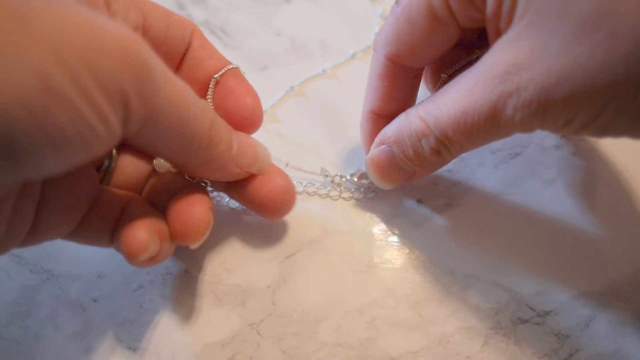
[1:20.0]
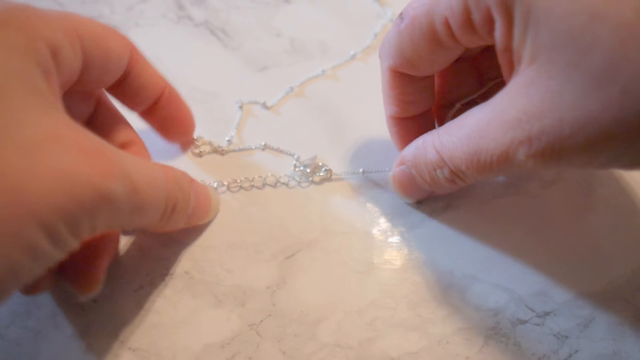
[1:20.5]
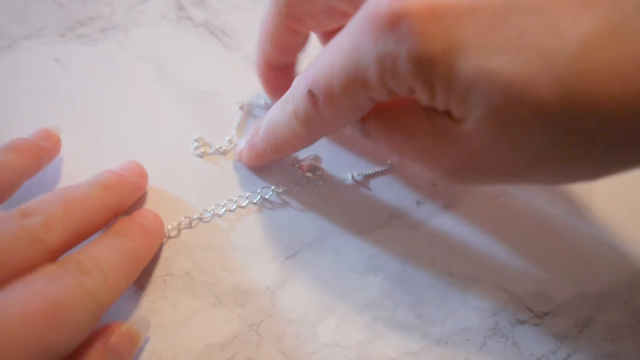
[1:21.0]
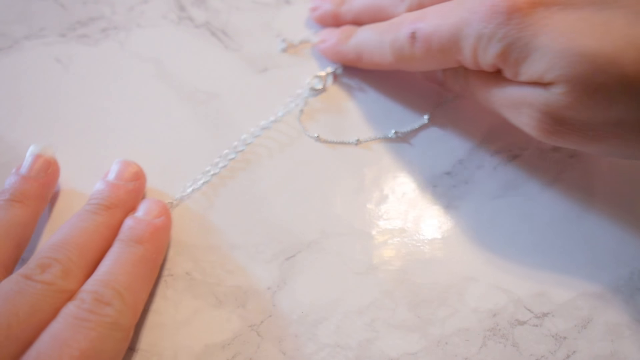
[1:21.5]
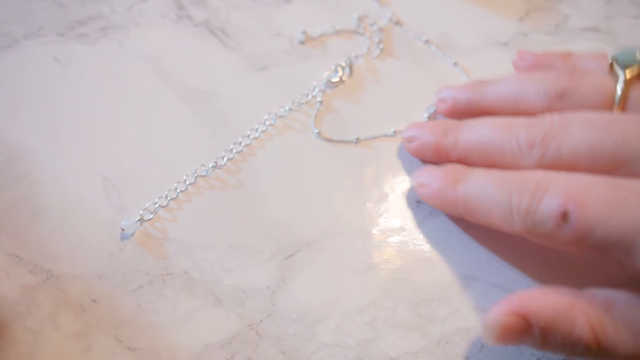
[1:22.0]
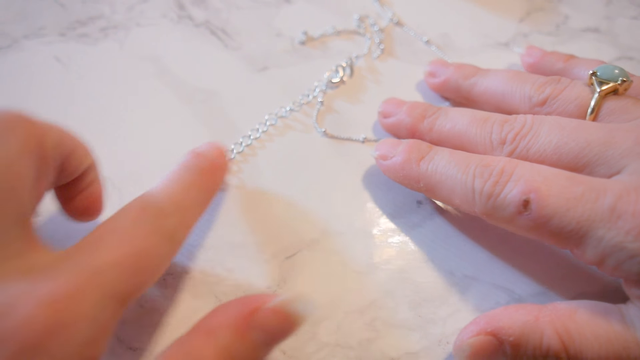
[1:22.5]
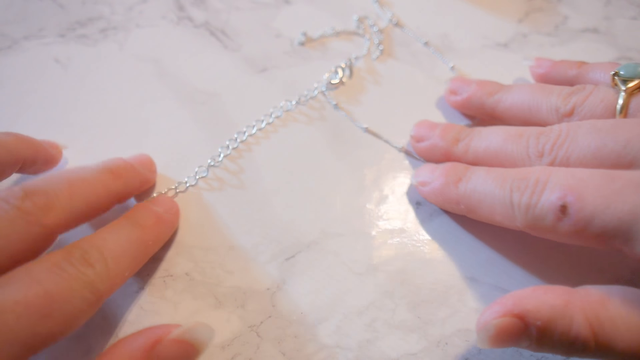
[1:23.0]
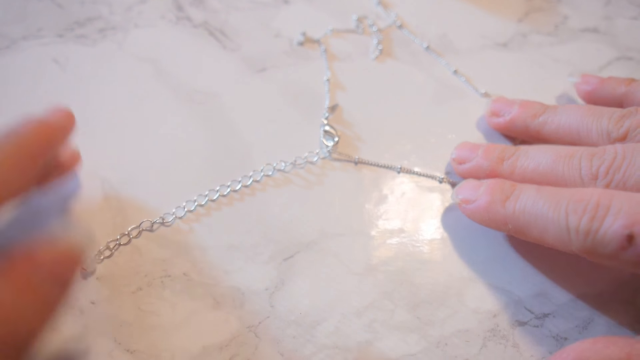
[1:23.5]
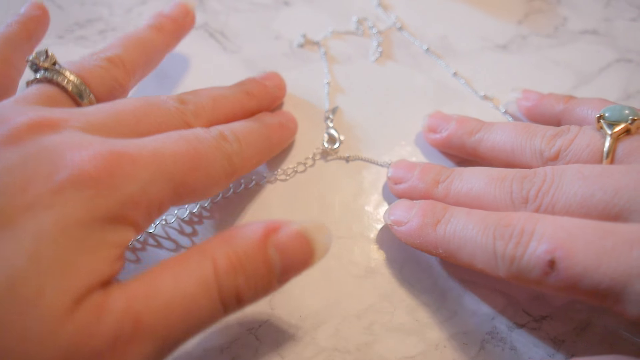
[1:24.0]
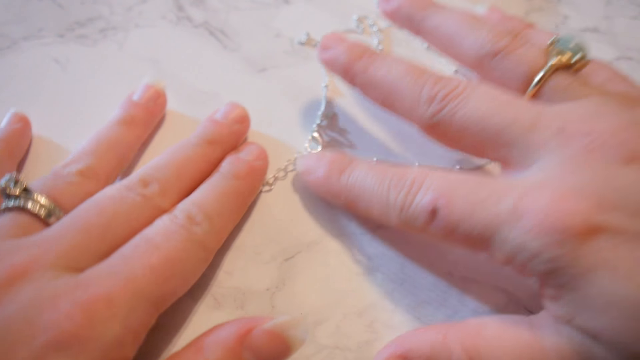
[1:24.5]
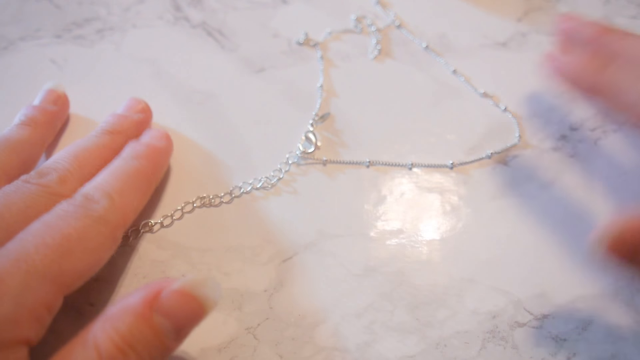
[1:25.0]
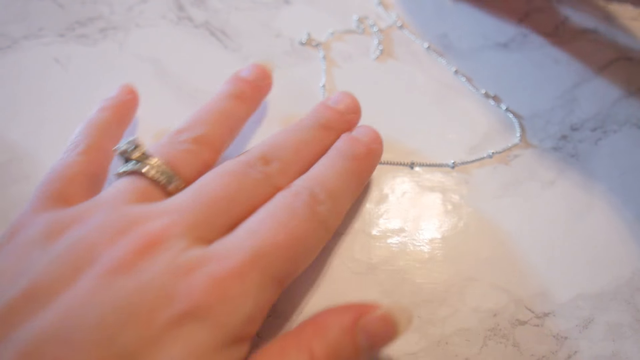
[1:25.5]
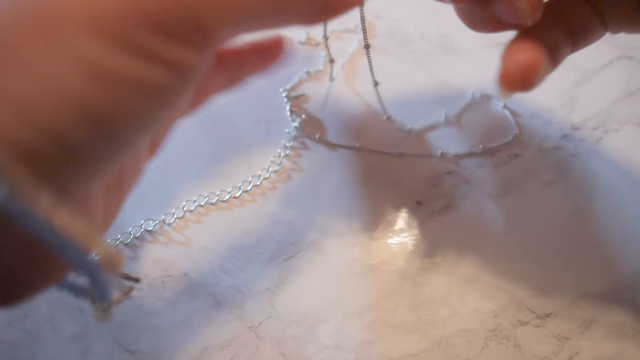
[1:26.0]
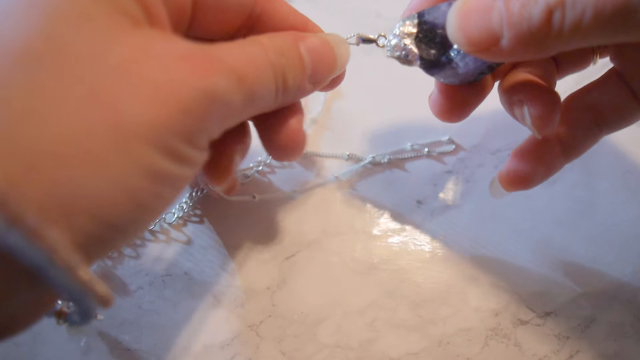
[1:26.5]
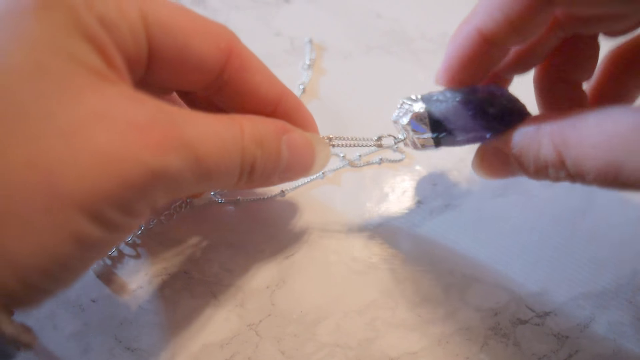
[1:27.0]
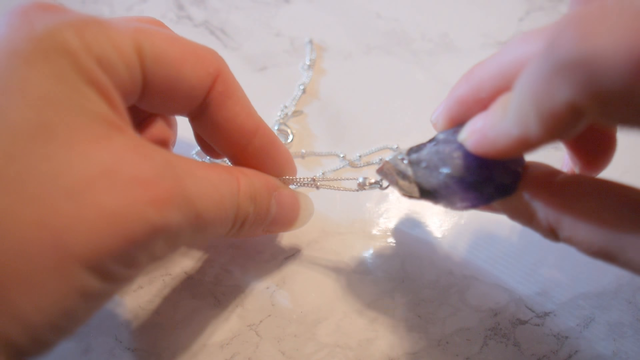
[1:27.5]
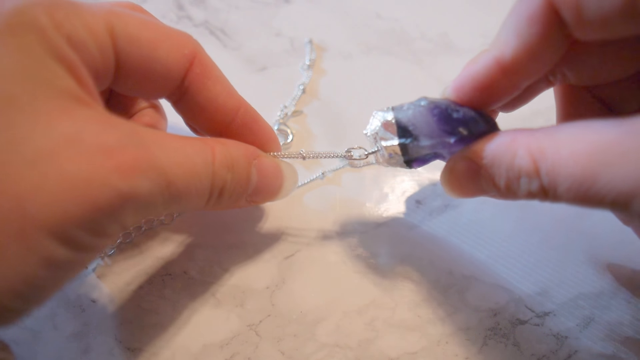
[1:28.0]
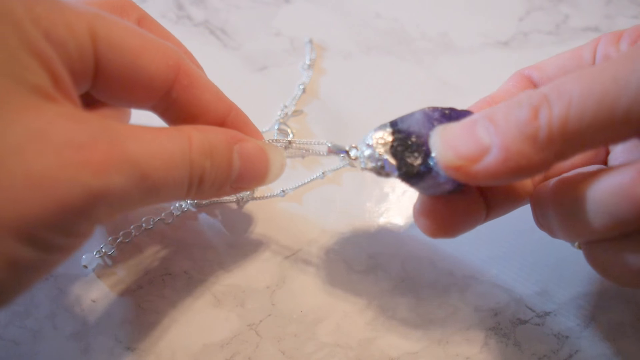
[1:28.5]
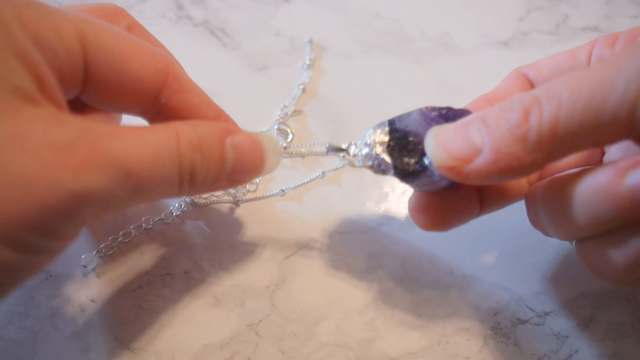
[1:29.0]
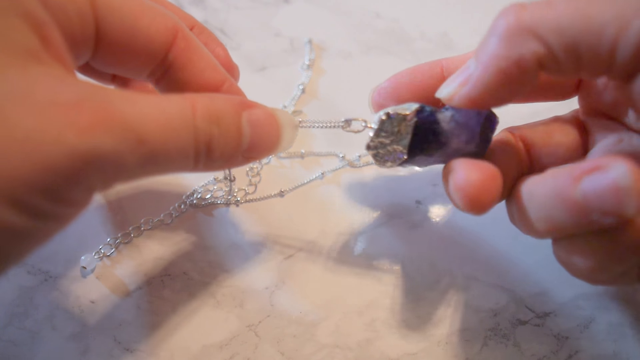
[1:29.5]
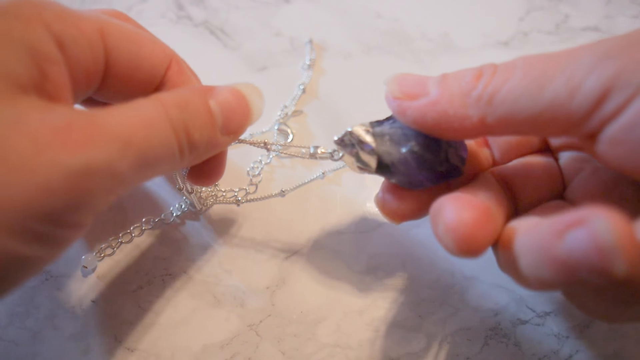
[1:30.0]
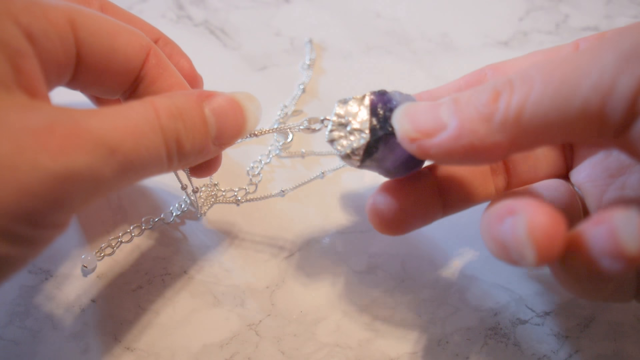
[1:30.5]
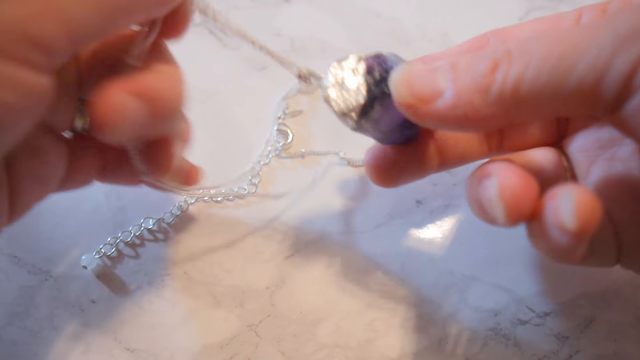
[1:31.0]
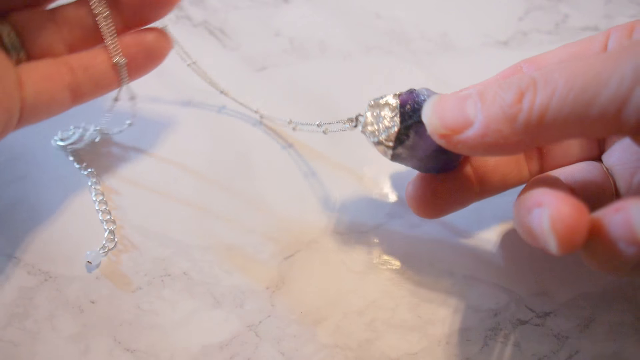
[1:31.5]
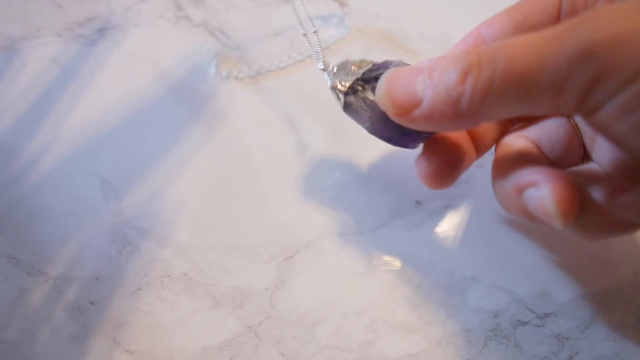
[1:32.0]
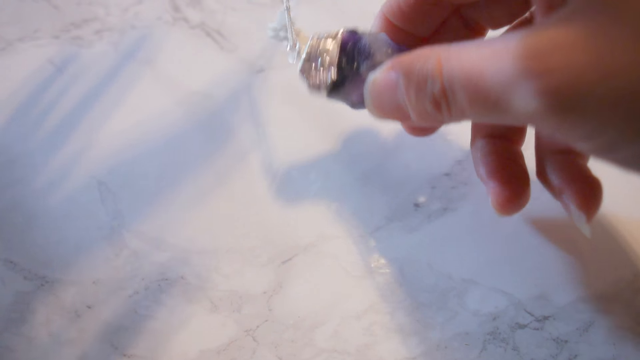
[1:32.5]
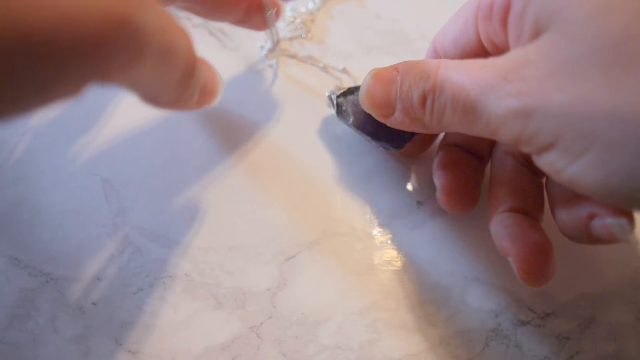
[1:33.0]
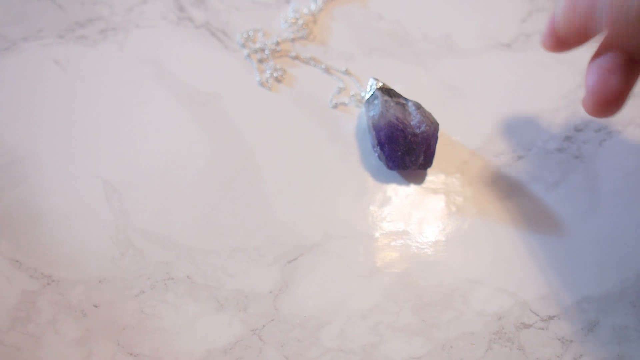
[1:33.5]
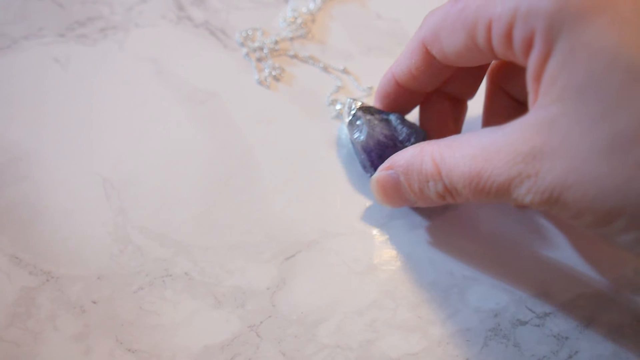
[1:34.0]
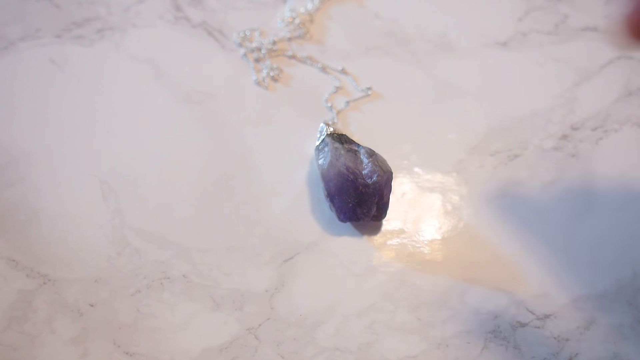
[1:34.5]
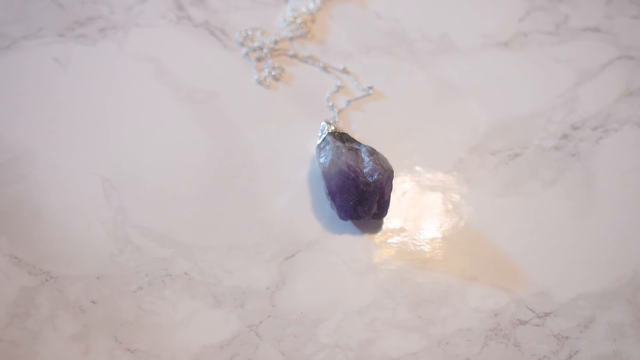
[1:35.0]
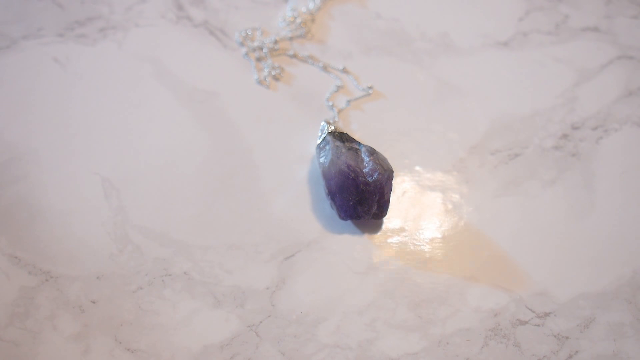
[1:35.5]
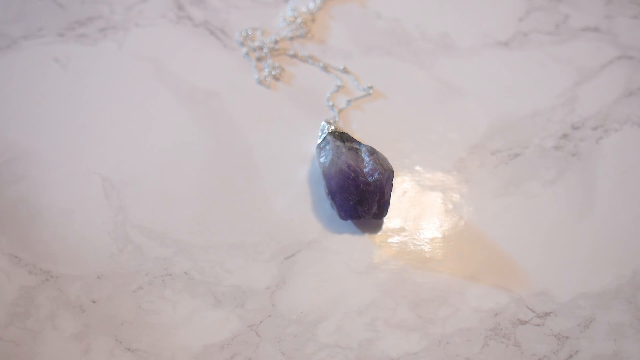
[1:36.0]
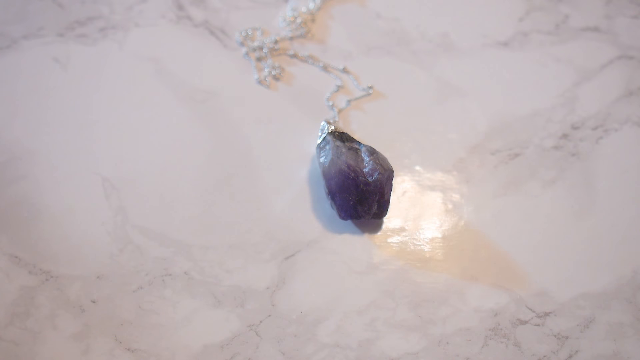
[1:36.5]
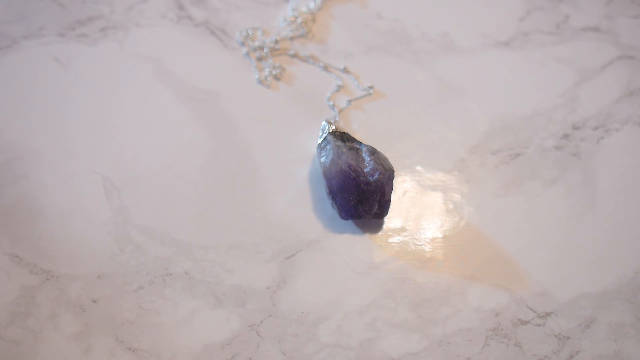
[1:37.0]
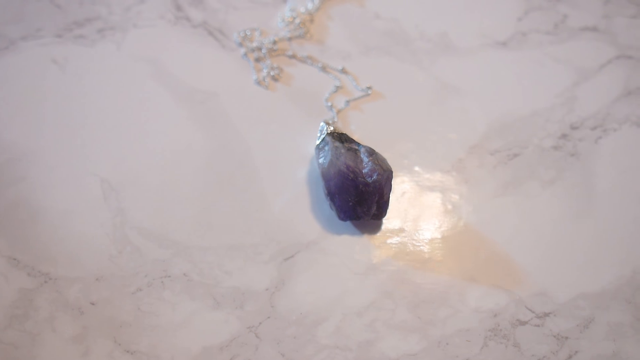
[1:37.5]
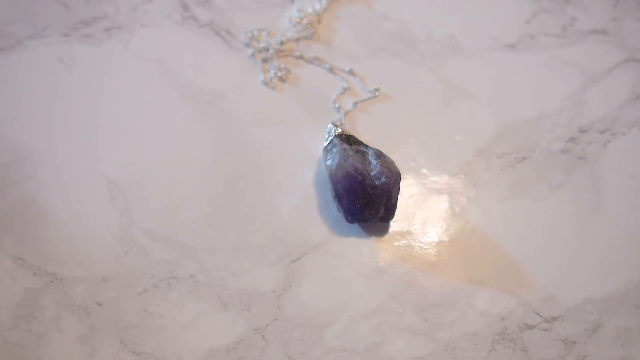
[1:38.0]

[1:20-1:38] Two hands hold the chain of the necklace, put it on the ground and spread the chain out on the surface of the floorboard, then put it back on the surface. A hand then picks up the shiny purple necklace and brings it close to the camera for a close observation. The person apparently examines the material the necklace is made of, observing it from every angle.